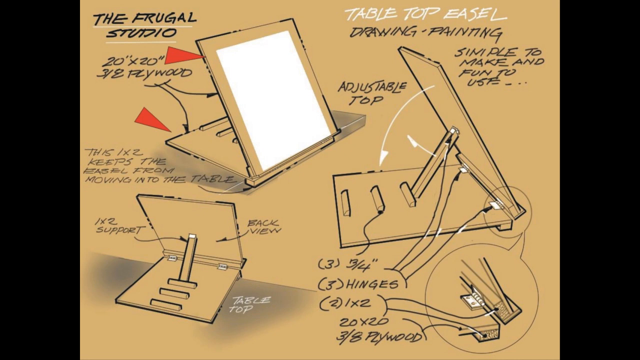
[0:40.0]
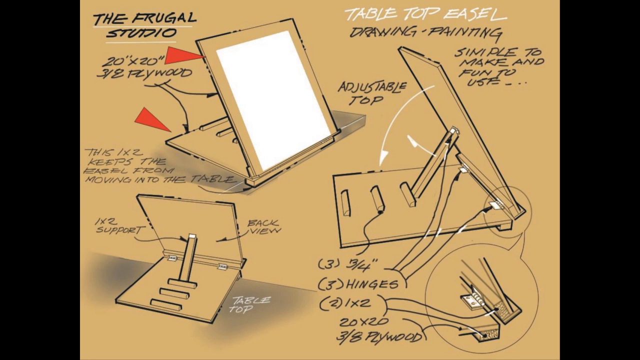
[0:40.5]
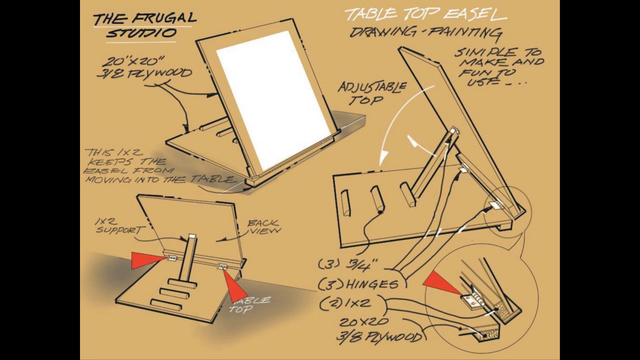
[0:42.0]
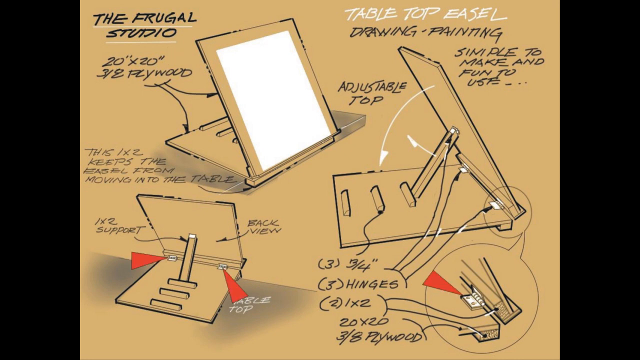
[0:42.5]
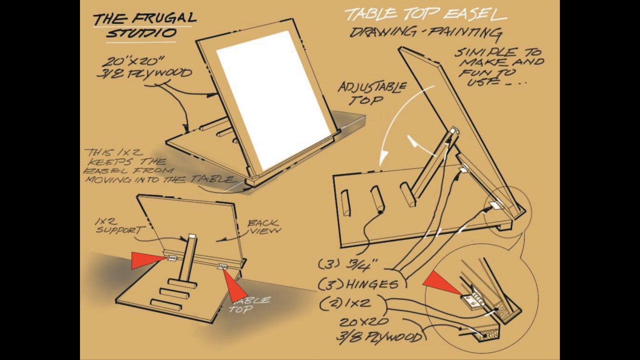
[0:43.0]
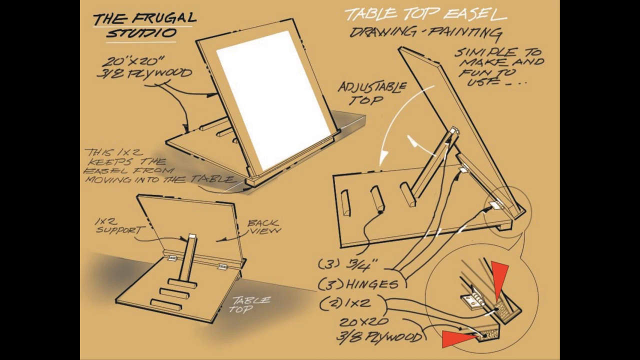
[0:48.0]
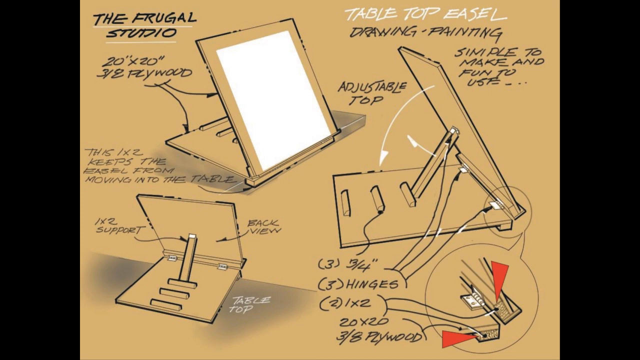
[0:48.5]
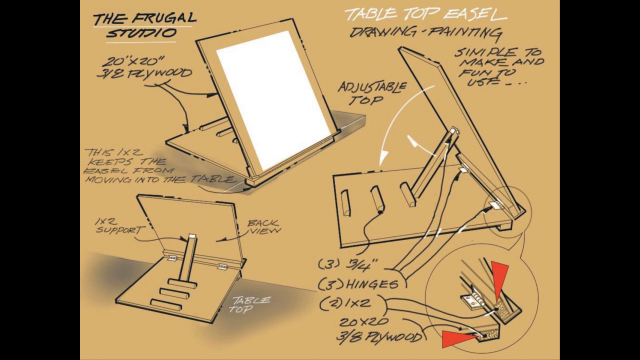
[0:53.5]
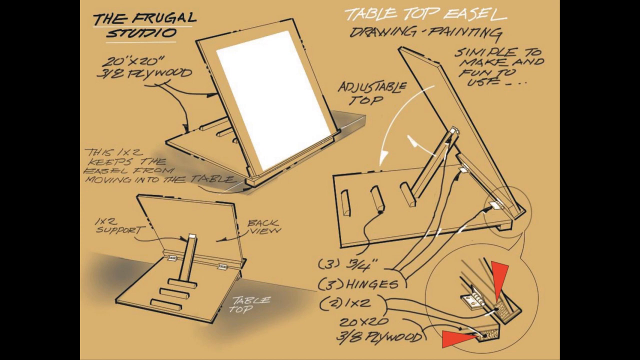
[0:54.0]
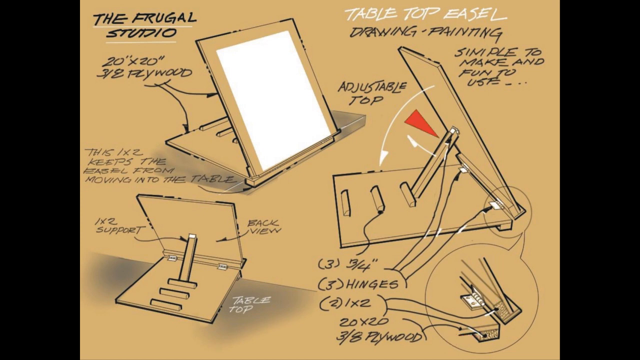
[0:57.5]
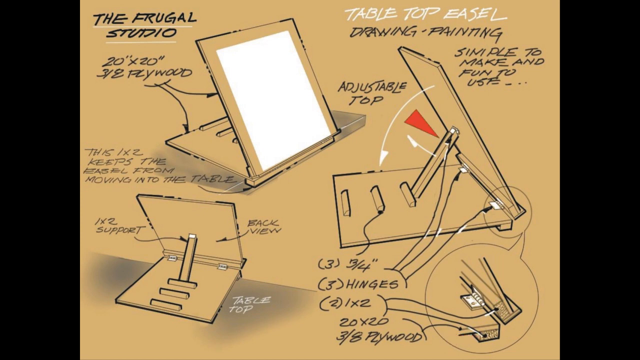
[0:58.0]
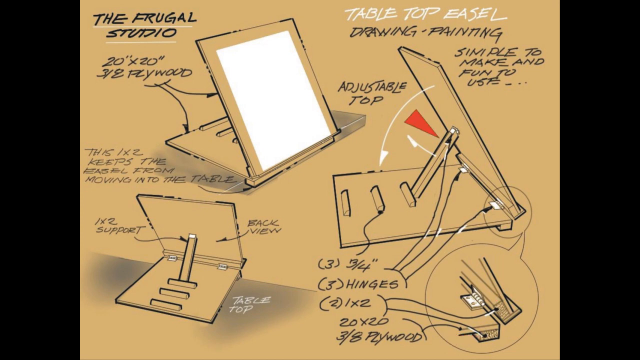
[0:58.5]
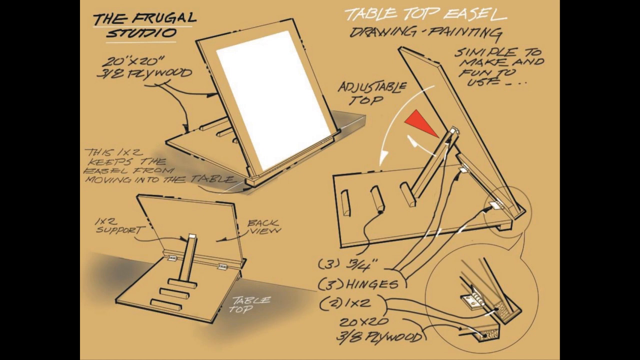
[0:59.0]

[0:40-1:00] The video by Mr. R. D. Murray at Frugal Studios continues its step-by-step guide to assembling the tabletop for drawing and painting, listing three 20 by 20 plywood, three hinges and an adjustable top. It shows how the hinges support the back of the tabletop.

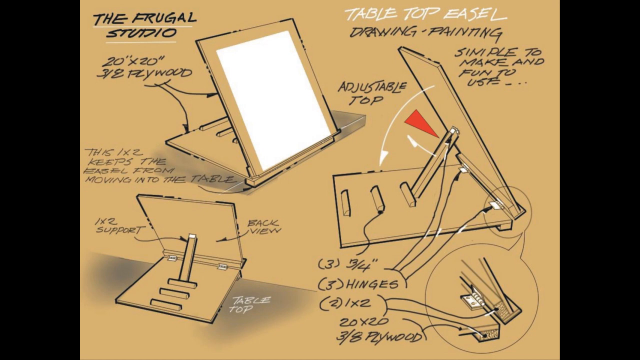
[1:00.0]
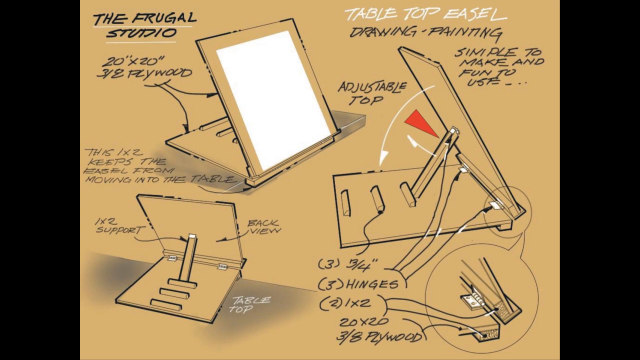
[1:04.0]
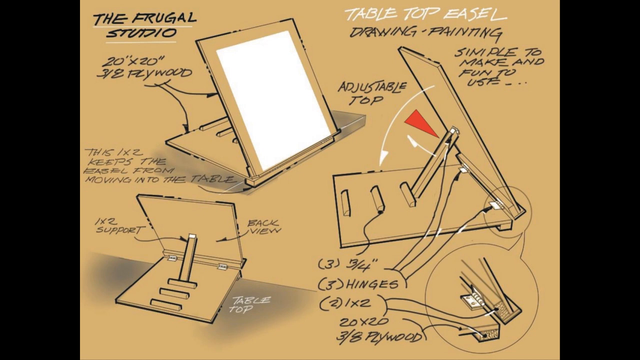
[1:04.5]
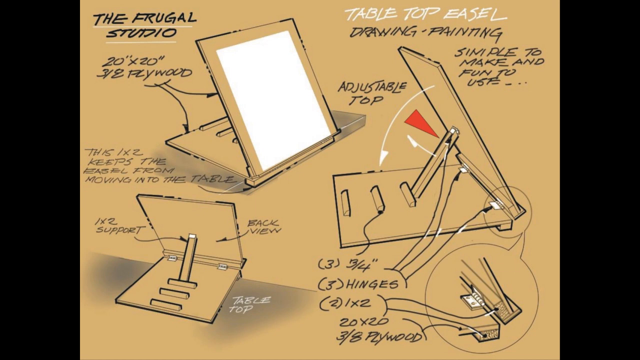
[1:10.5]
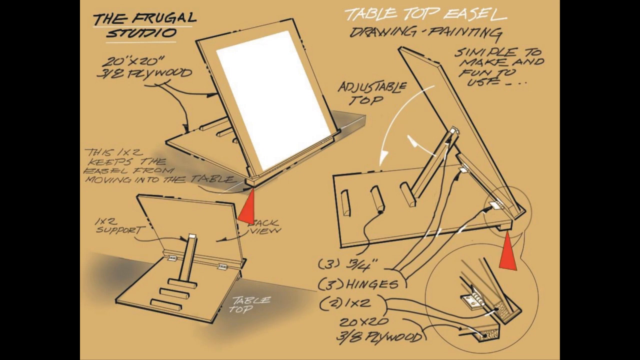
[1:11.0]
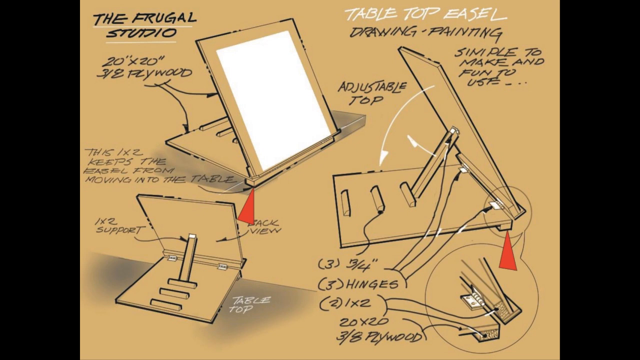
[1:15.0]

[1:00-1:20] The step-by-step video by Mr. R. D. Murray at Frugal Studios on building an adjustable tabletop easel lists the materials: three 20 by 20 plywood, three hinges and an adjustable top. According to the video, the hinges are for support and for easy adjustment.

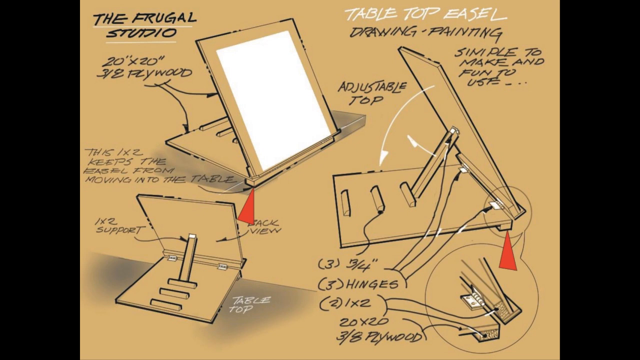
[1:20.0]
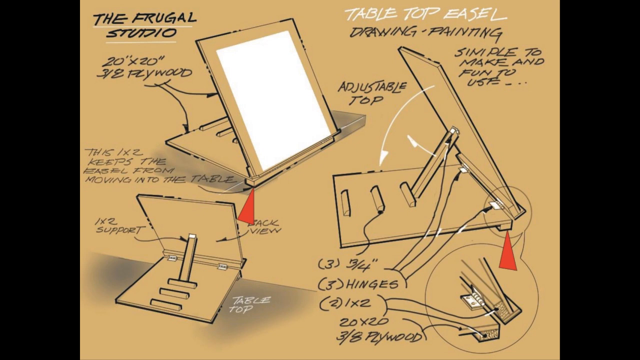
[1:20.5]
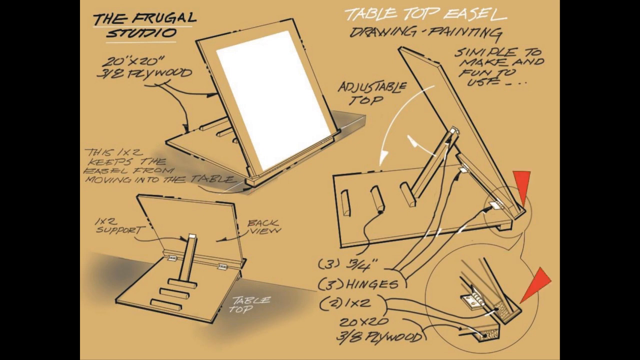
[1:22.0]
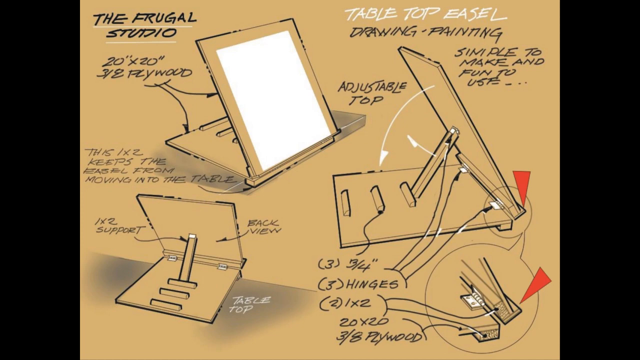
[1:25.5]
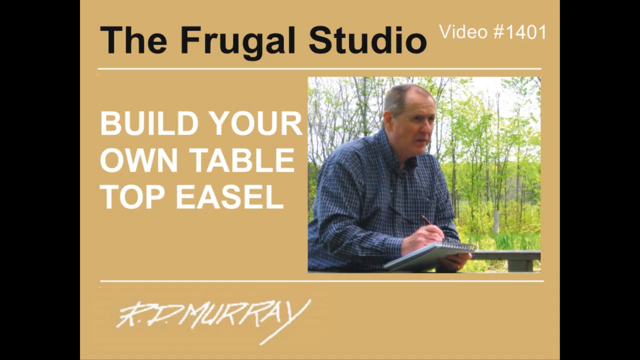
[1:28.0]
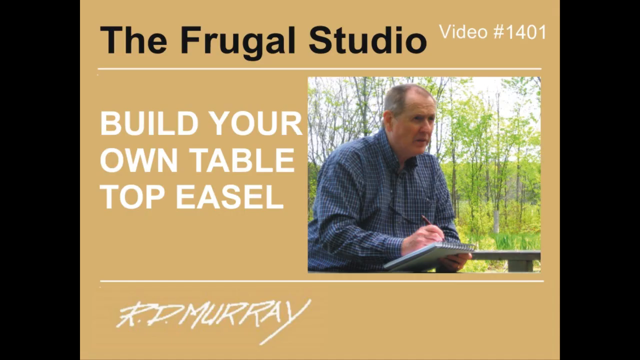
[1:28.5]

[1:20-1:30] The step-by-step guide to making a tabletop easel, by Mr. R. D. Murray of Frugal Studios, lists three 20 by 20 plywood, three hinges and an adjustable top. The back is shown, with the hinges supporting the tabletop.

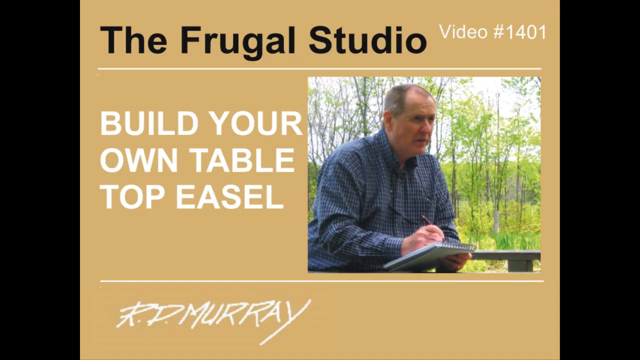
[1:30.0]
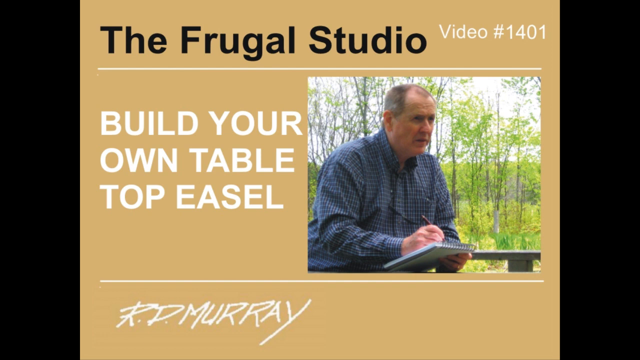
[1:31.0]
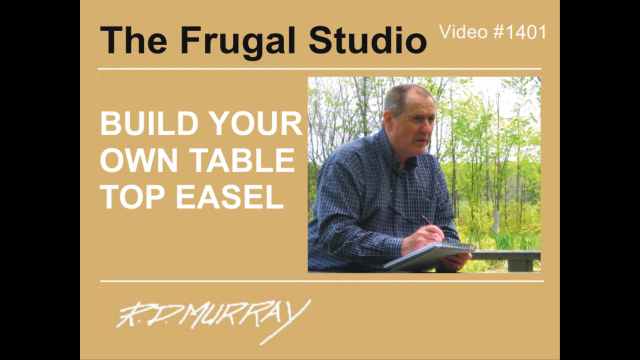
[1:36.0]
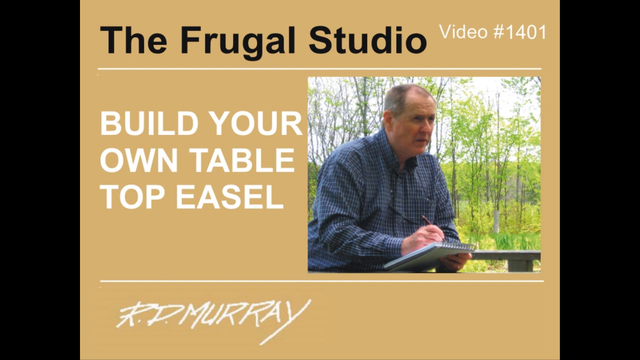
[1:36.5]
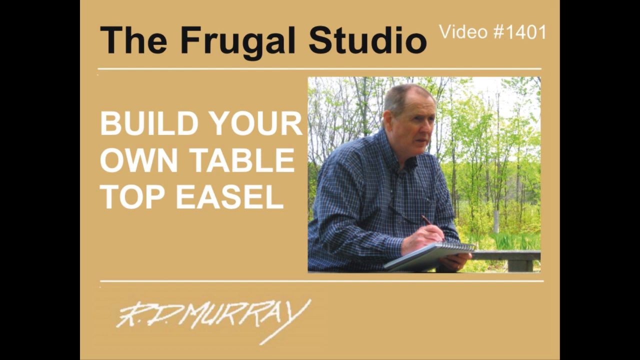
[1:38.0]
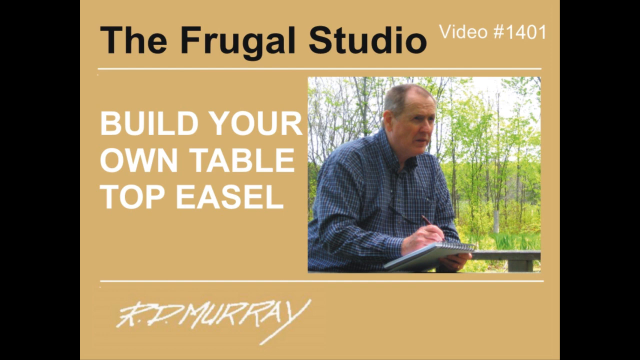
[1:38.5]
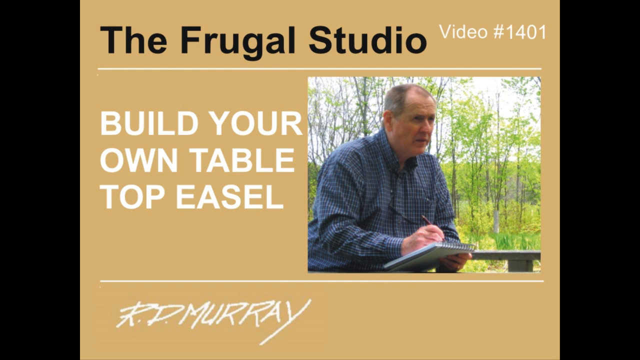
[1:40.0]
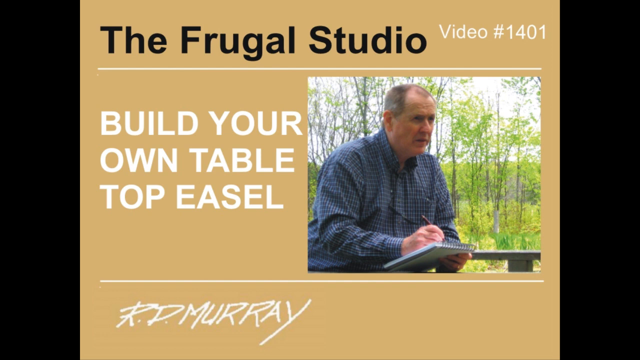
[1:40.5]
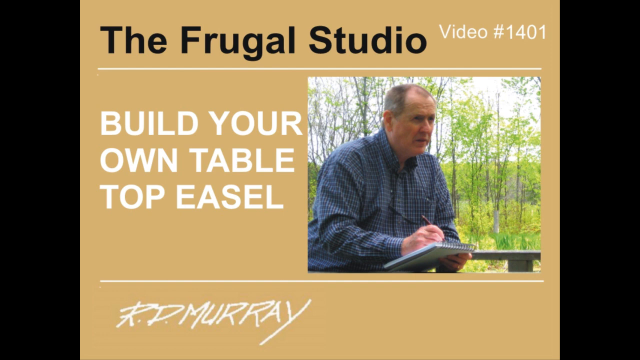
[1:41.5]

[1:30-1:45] The video from Frugal Studios by Mr. R. D. Murray on making a do-it-yourself table easel lists three 20 by 20 plywood, three hinges and one adjustable top. The hinges are placed at the back to provide support, allow easy adjustment and keep the easel from moving.